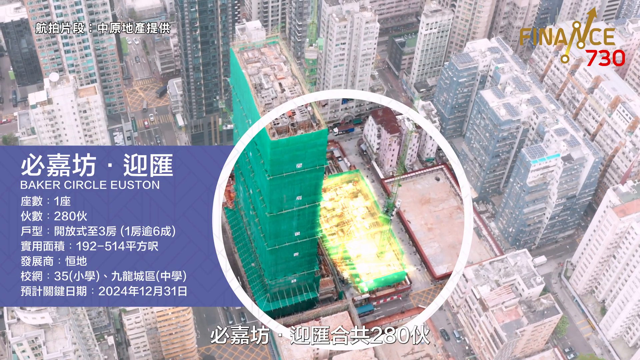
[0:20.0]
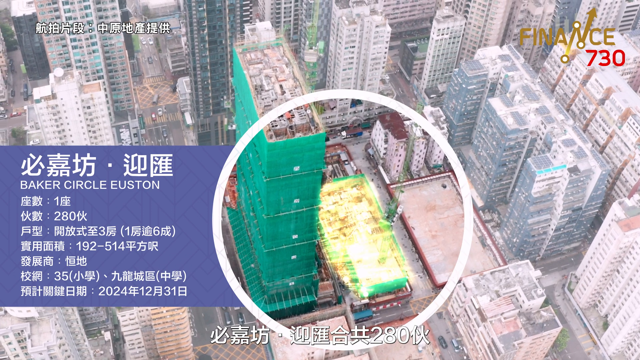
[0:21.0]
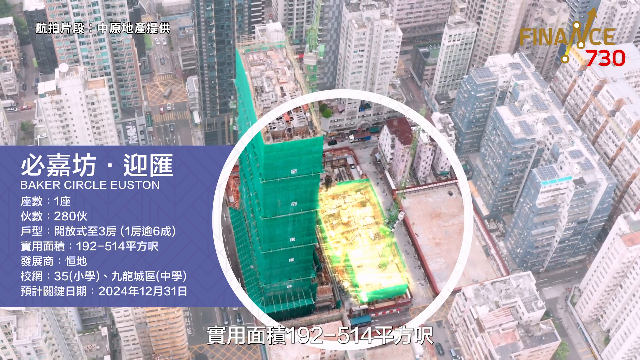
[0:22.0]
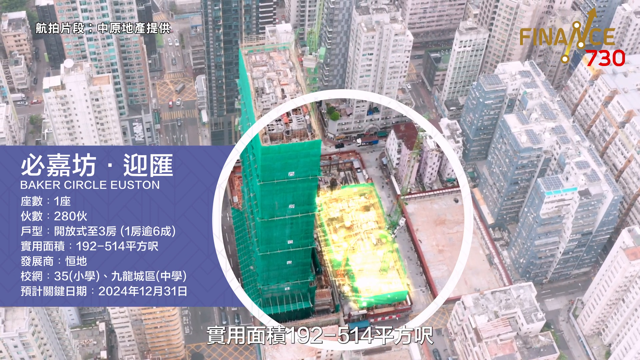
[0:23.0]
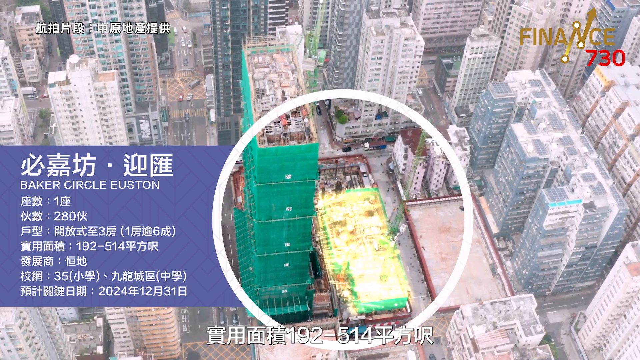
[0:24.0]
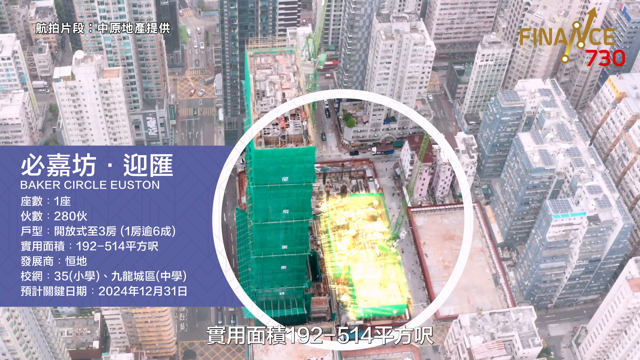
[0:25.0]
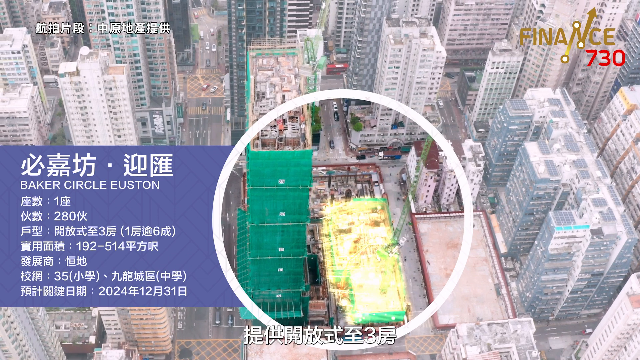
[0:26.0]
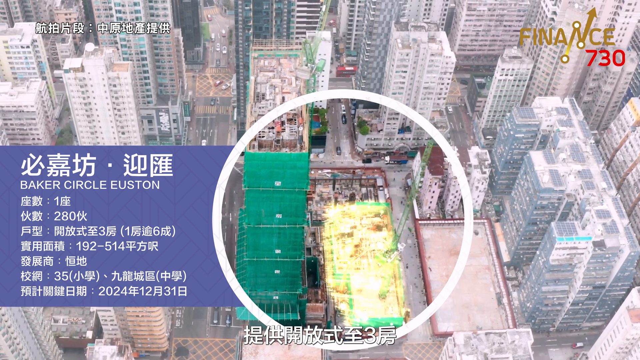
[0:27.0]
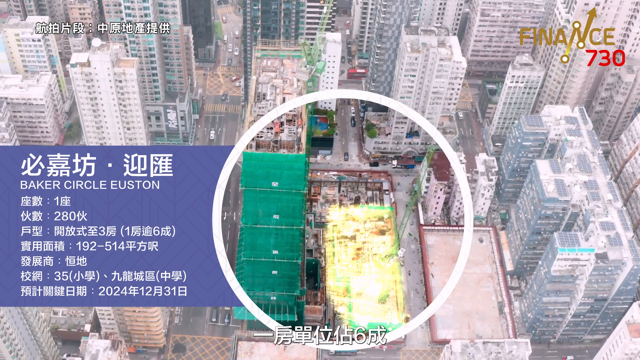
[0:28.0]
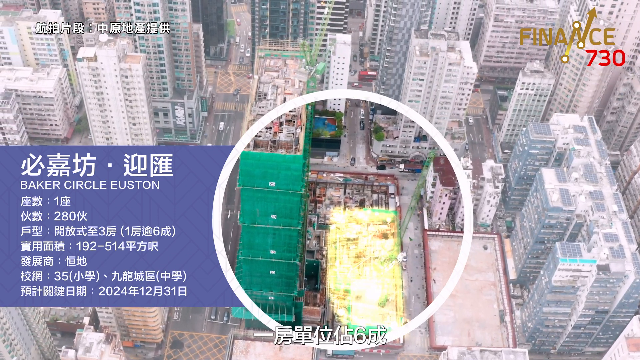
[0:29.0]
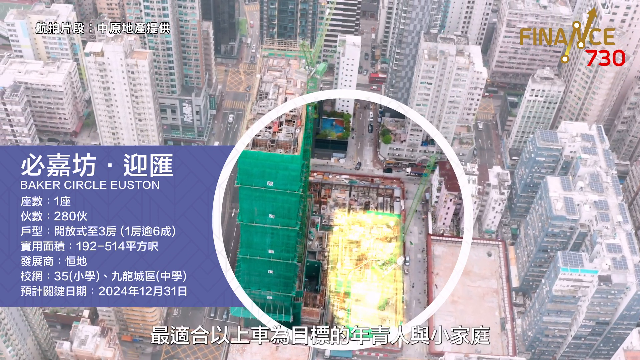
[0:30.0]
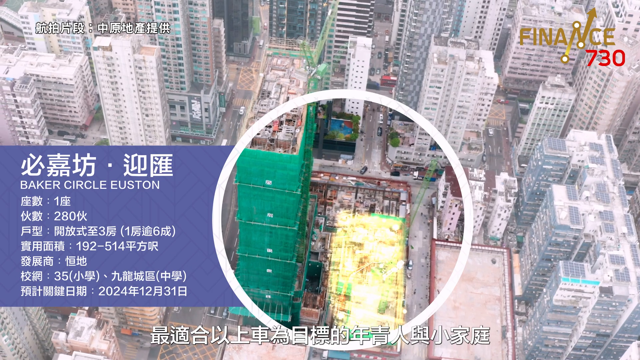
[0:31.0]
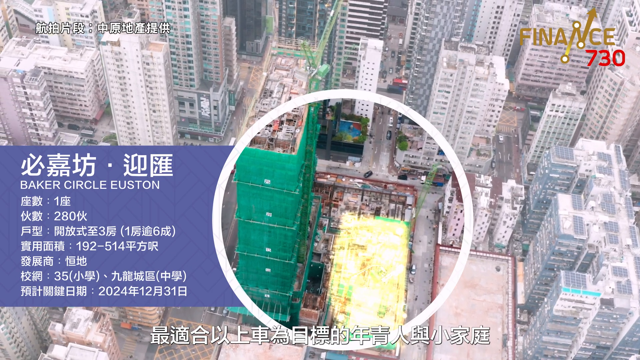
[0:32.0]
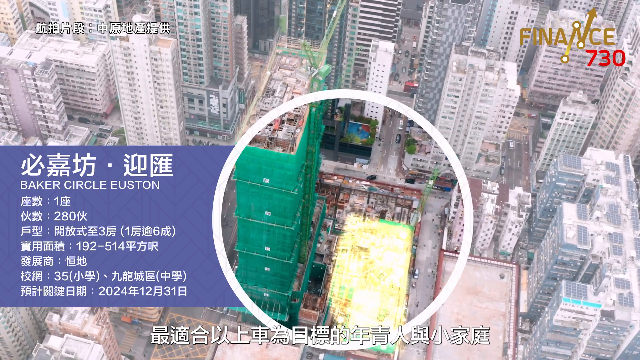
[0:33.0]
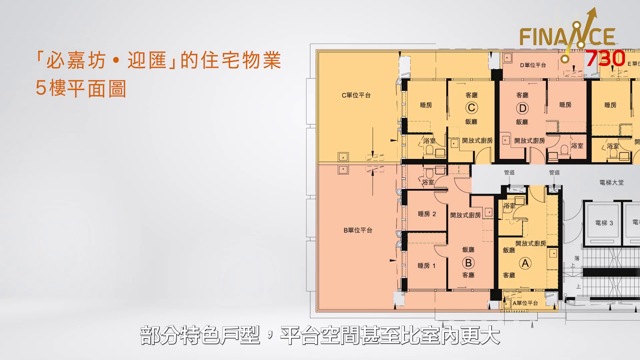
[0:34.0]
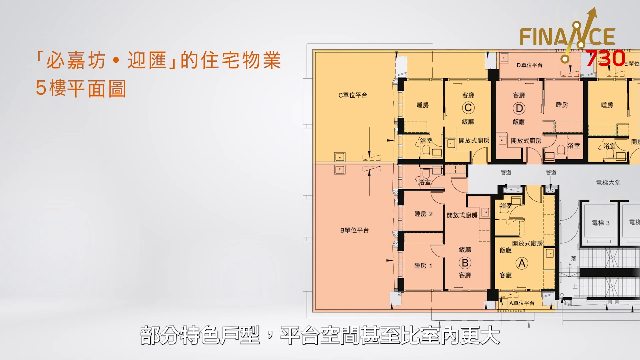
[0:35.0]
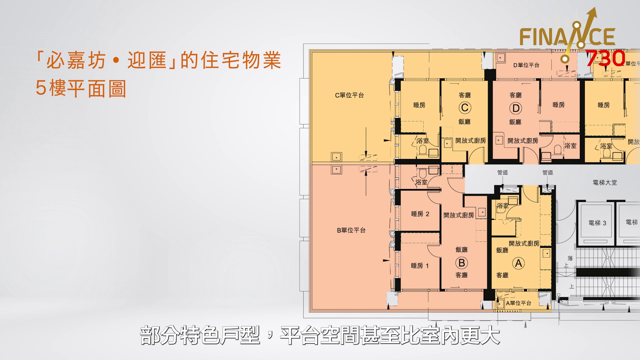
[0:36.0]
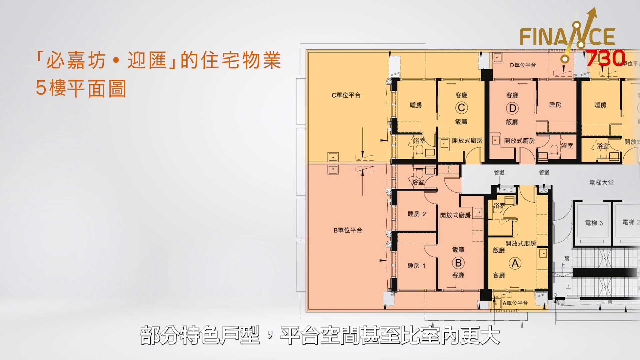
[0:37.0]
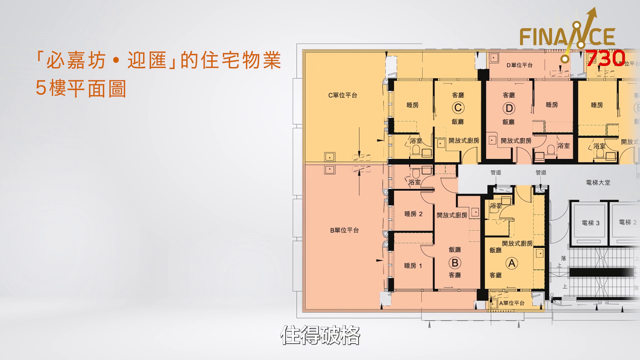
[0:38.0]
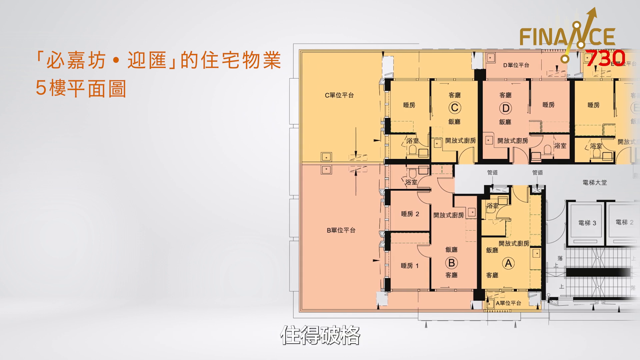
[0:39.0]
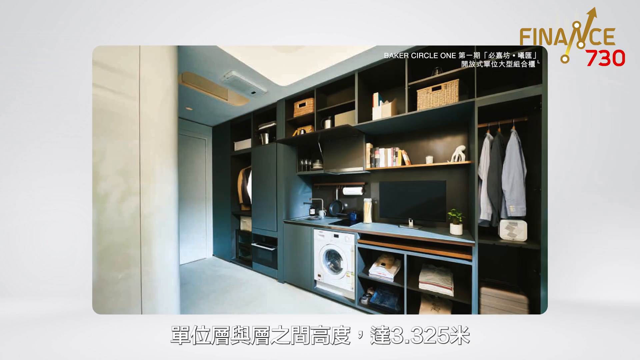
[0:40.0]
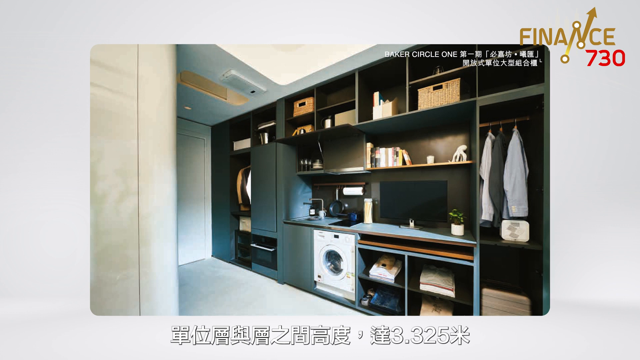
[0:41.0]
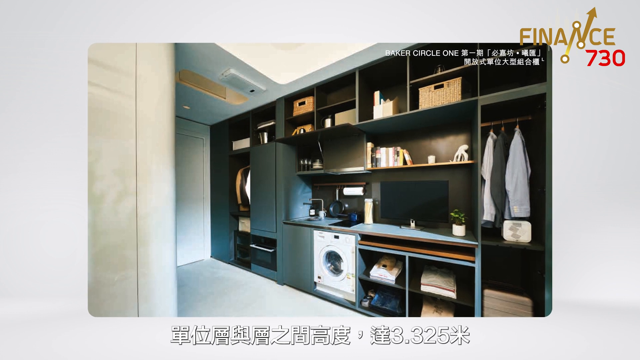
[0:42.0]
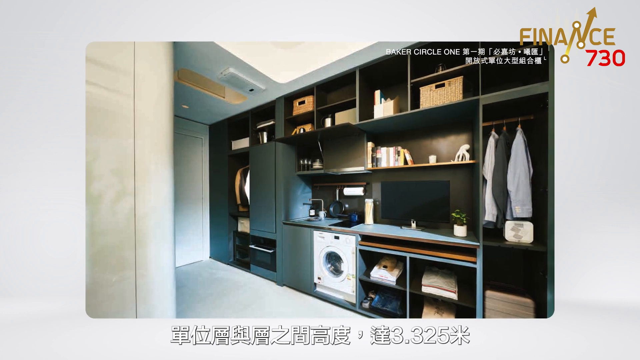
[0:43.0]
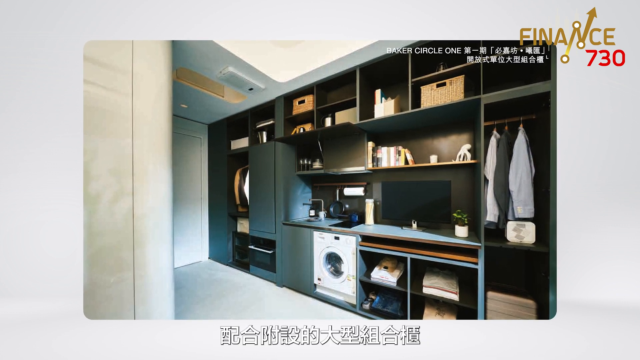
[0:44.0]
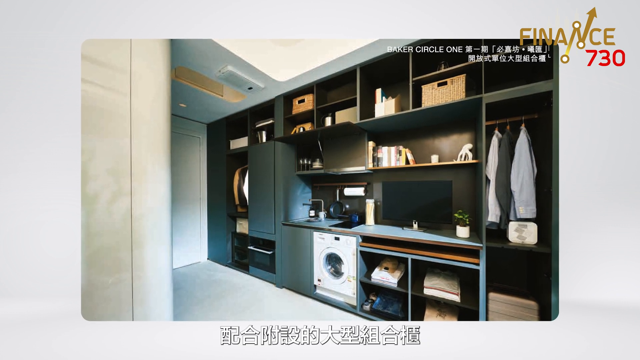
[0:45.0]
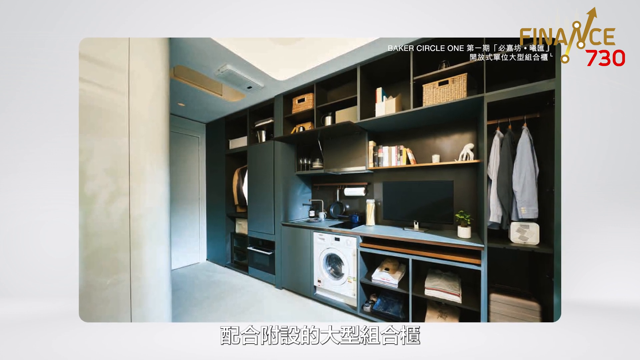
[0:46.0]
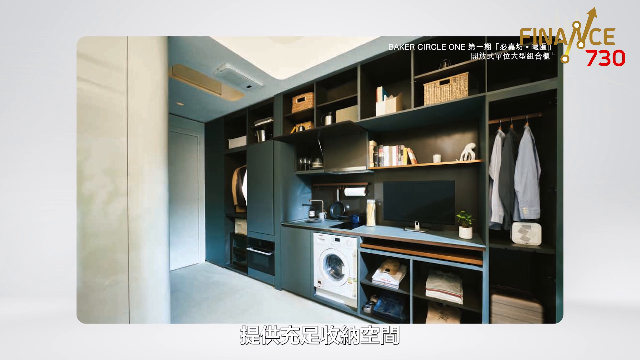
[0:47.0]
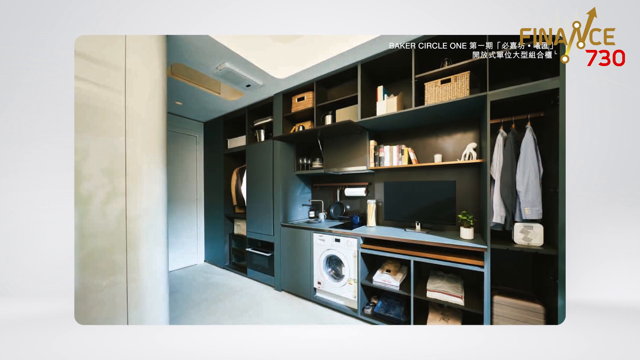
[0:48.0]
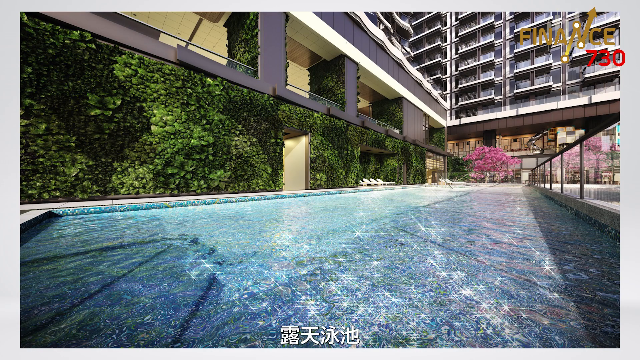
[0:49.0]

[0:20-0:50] An overhead view shows a lot of very tall buildings. A blue box on the left side says "Baker Circle, Houston", and a building is circled within a white circle. The view shifts a little, and the building appears to be in the process of being built. The scene switches to a floor plan with unreadable writing; some areas of it are yellow, some pink and some white. Next comes an interior view of what looks like a closet-type area, with clothes hanging on either end and shelves in the middle holding various little boxes for storing things. There is a small machine that appears to be a washing machine or possibly a combo washer-dryer, with a little sink above it, and paper towels are visible. The view then switches from the interior to an exterior view showing a pool, probably for the residents.